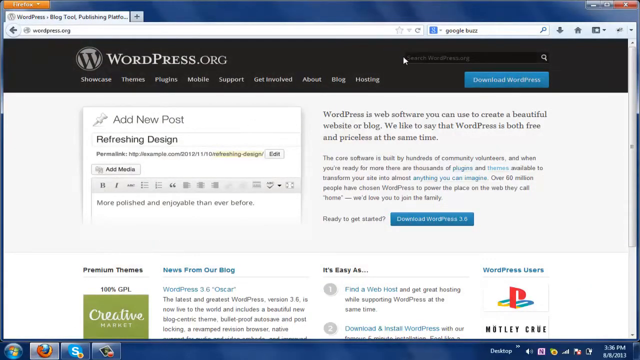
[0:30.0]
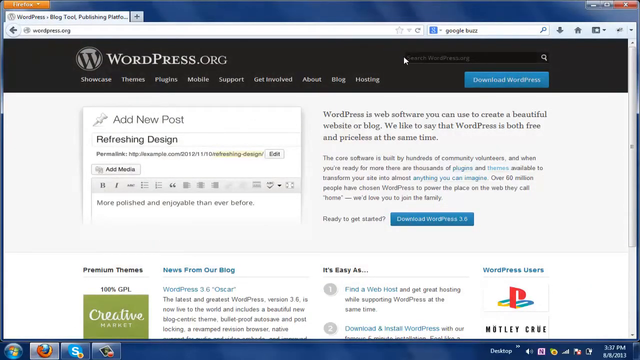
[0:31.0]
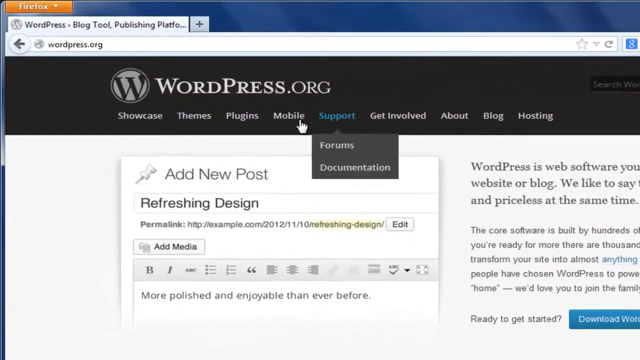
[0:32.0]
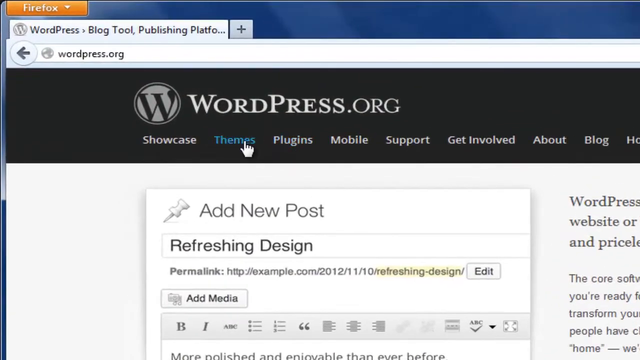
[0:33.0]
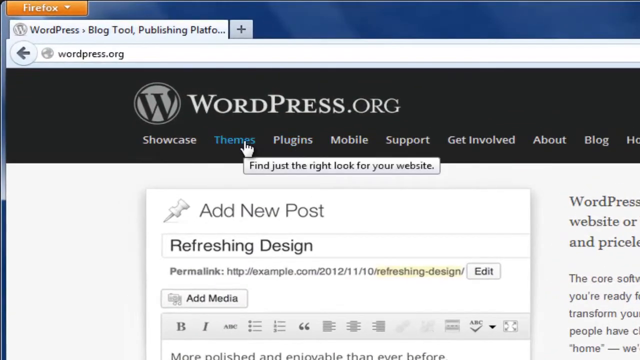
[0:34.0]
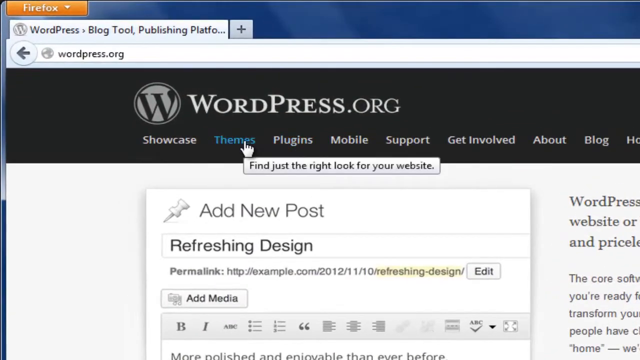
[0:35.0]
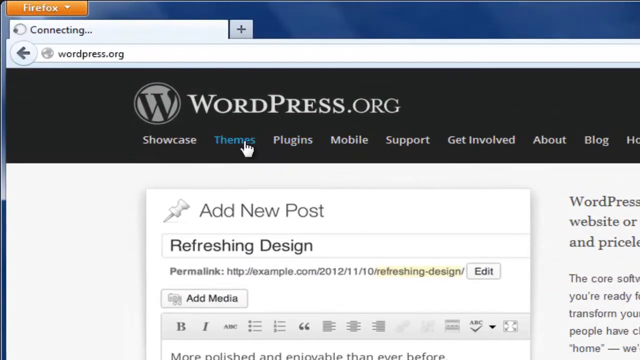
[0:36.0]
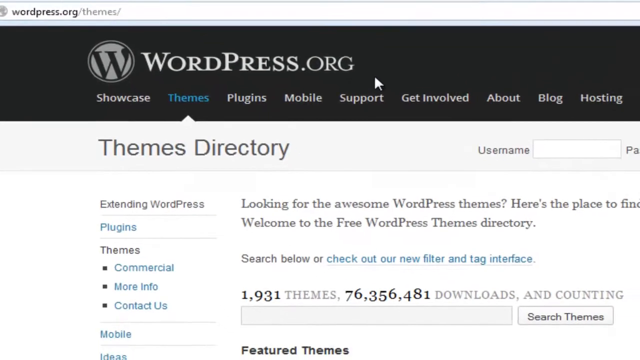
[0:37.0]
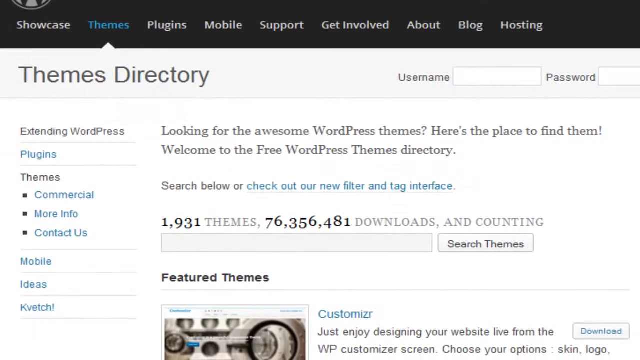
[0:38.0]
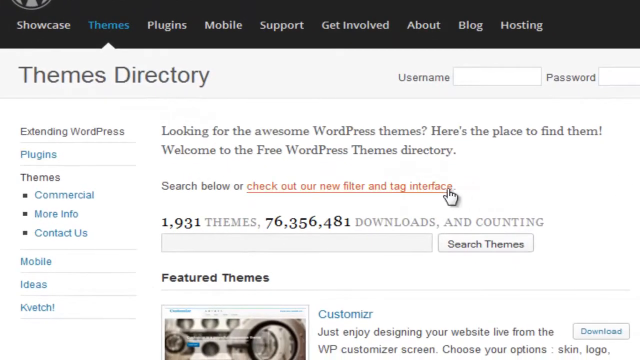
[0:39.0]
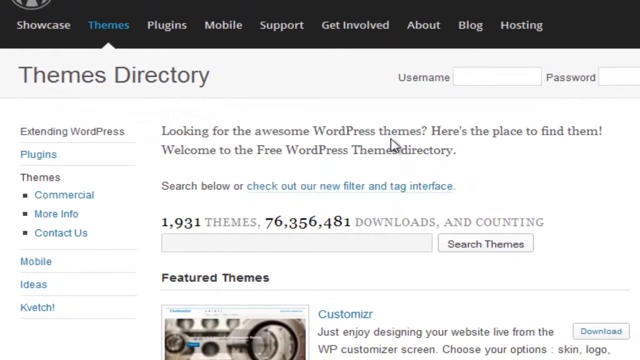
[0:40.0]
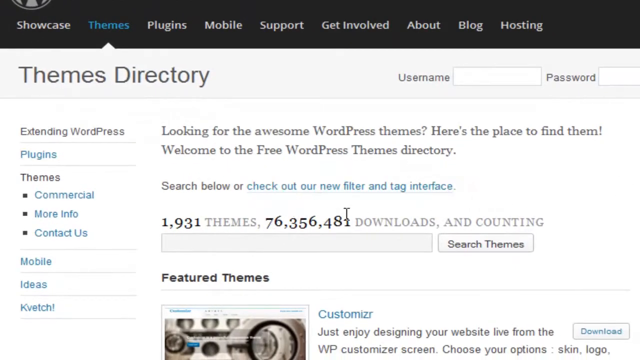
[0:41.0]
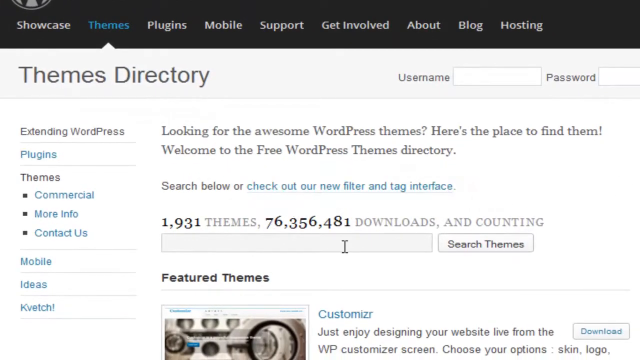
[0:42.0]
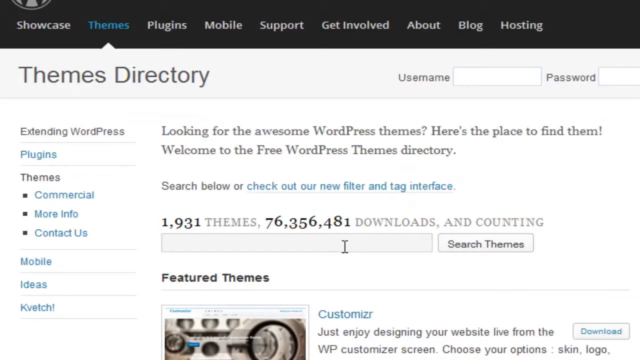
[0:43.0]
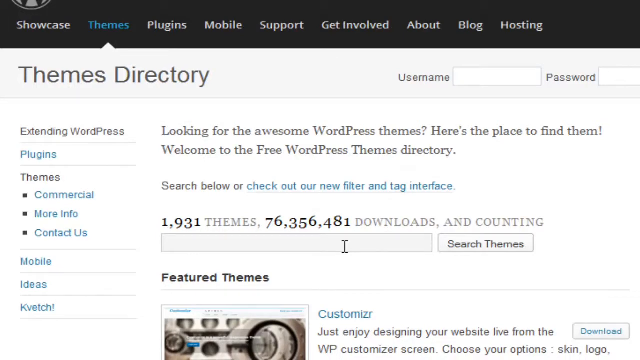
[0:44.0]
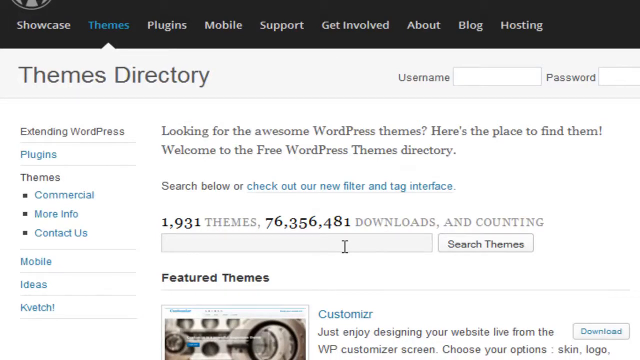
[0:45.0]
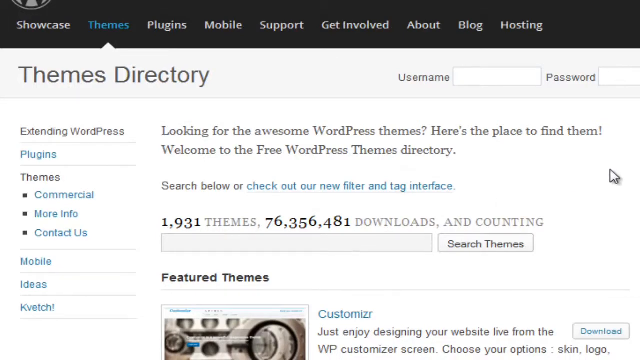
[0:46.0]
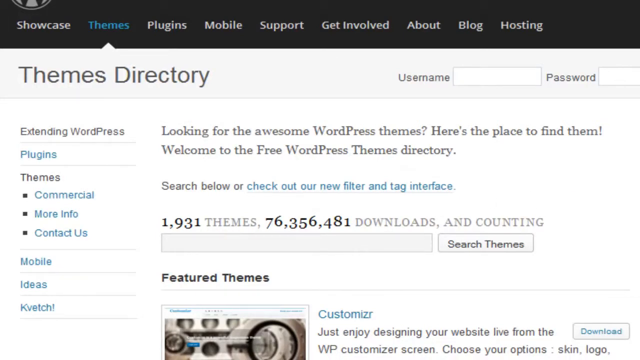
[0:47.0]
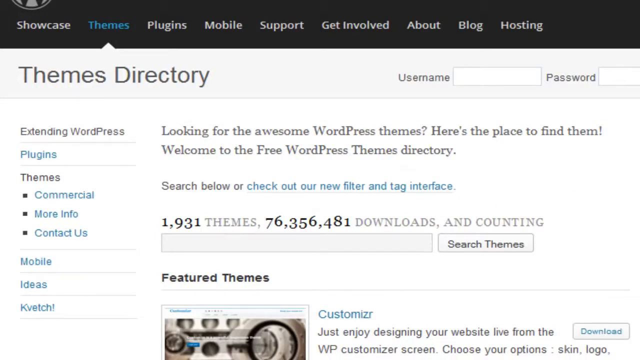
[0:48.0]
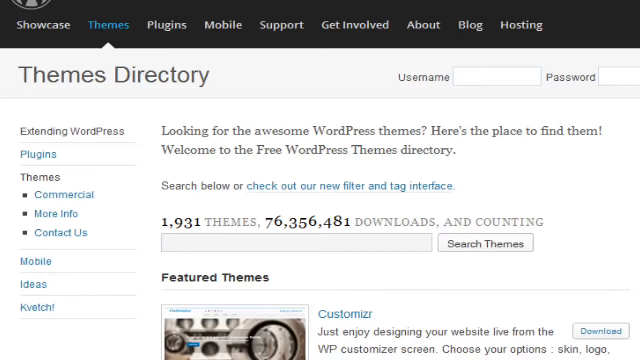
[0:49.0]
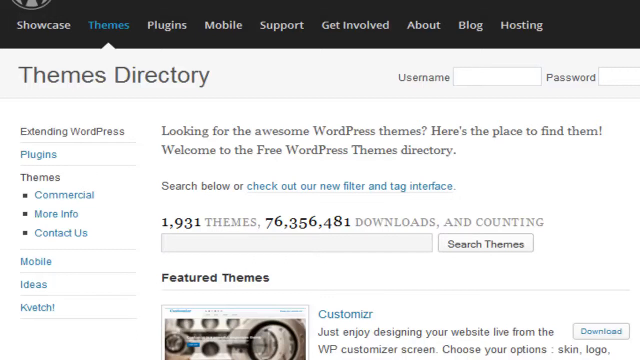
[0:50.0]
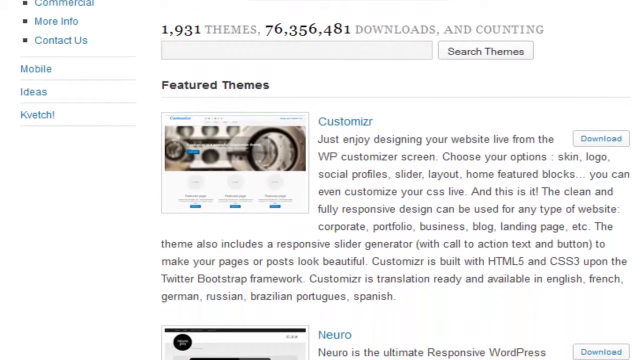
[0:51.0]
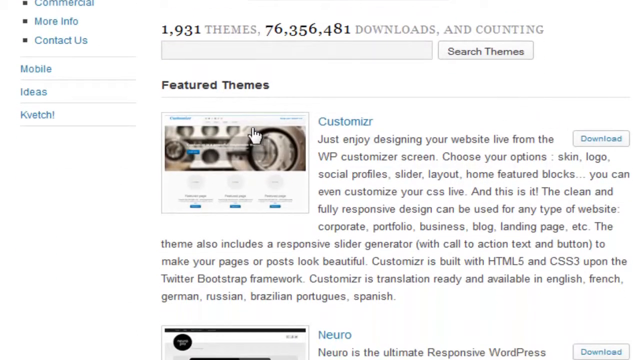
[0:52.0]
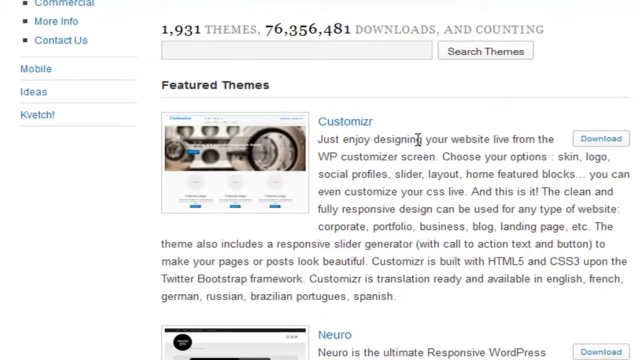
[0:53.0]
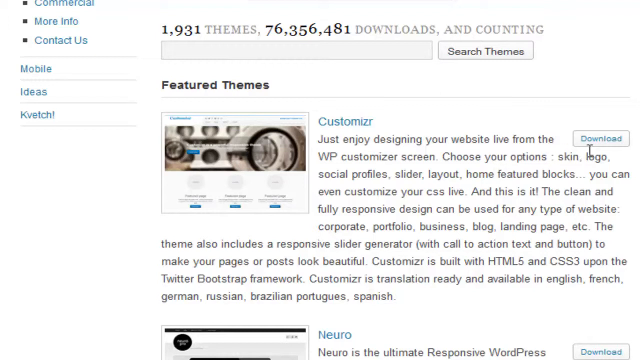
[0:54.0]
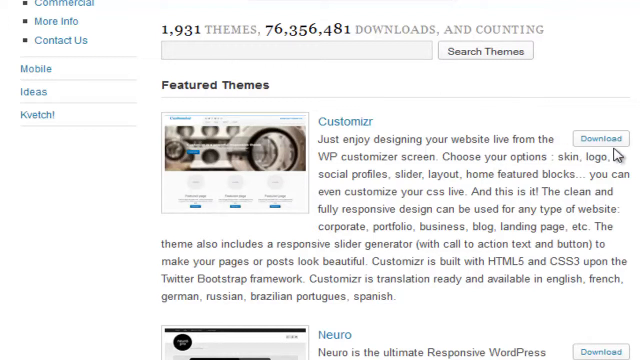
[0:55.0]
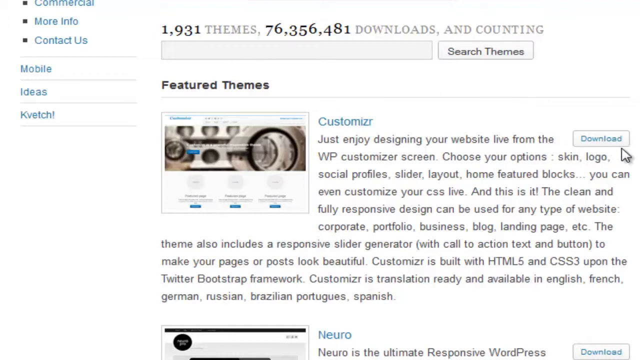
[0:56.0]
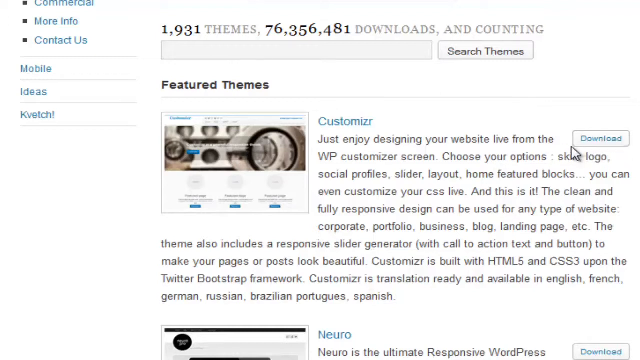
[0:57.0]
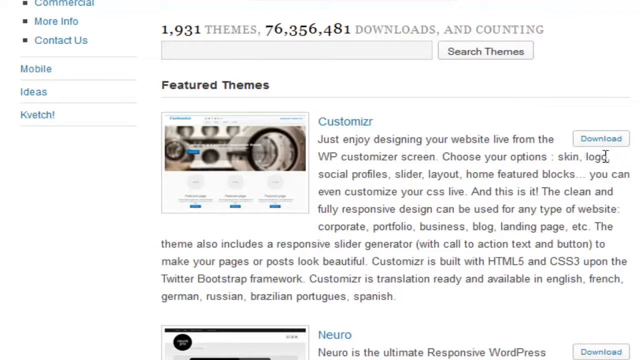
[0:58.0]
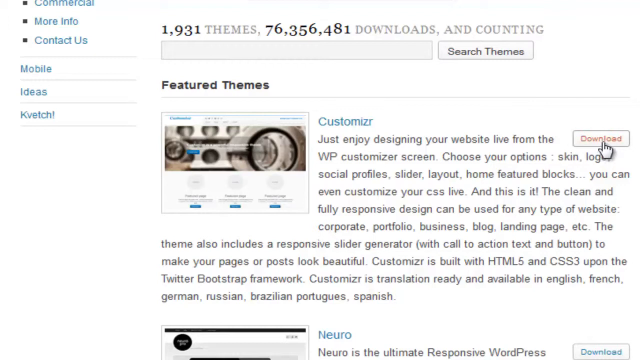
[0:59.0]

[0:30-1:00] The WordPress.org website is searched, and the themes section is opened, leading to a page welcoming visitors to the WordPress themes directory. The page invites those looking for themes to find them there, offers featured themes to scroll through, and mentions designing a website live from the WP Customize screen.